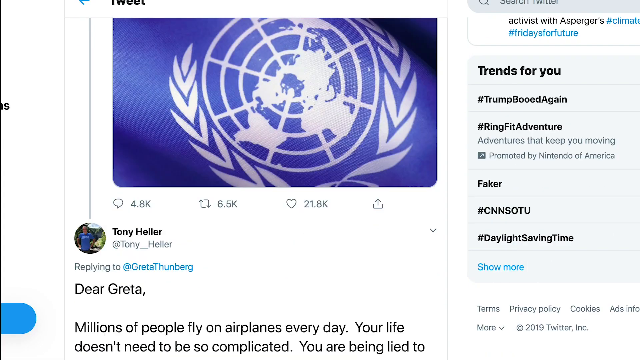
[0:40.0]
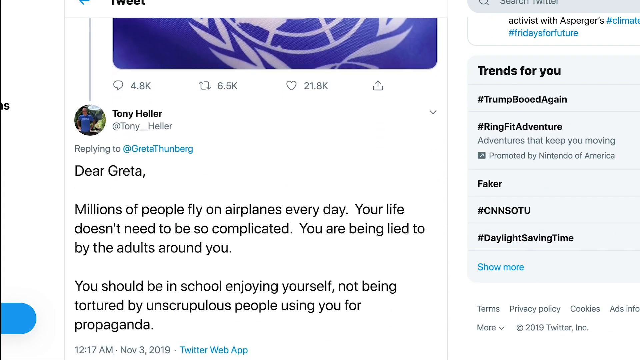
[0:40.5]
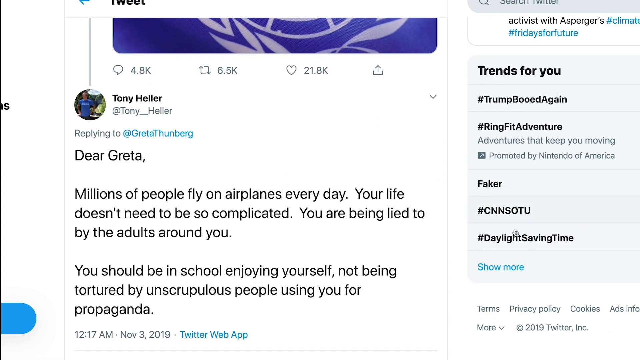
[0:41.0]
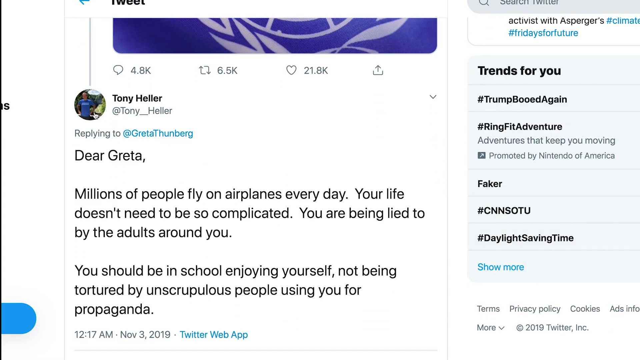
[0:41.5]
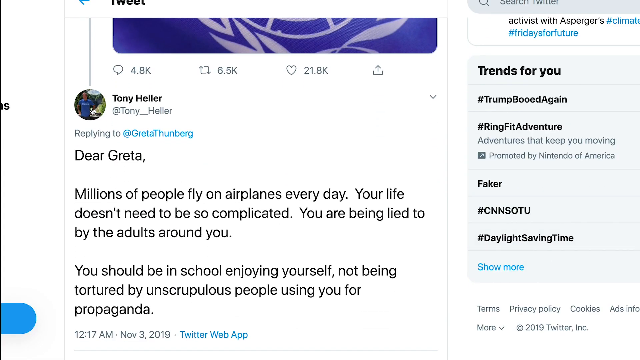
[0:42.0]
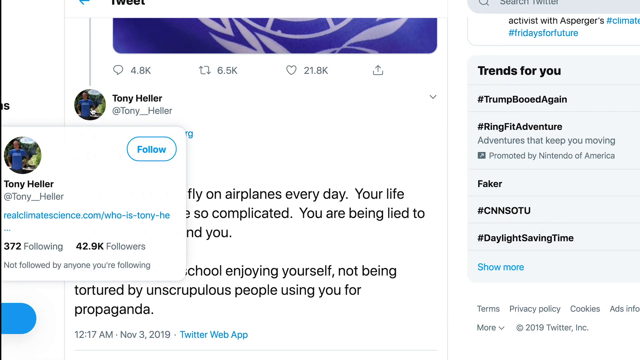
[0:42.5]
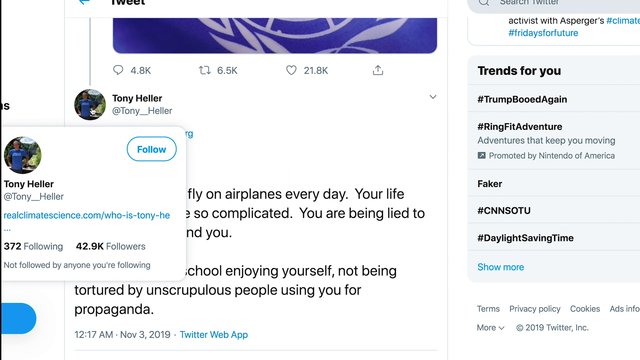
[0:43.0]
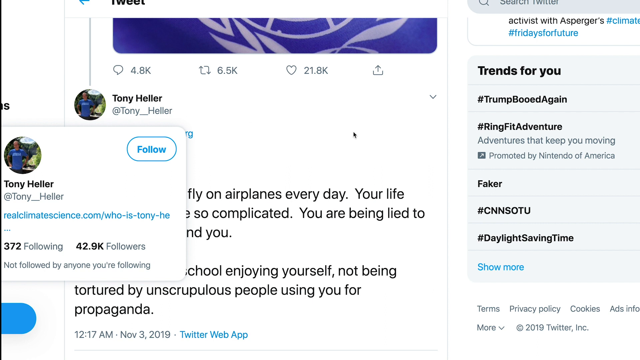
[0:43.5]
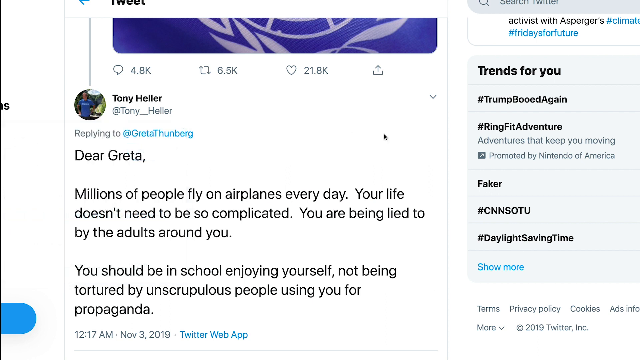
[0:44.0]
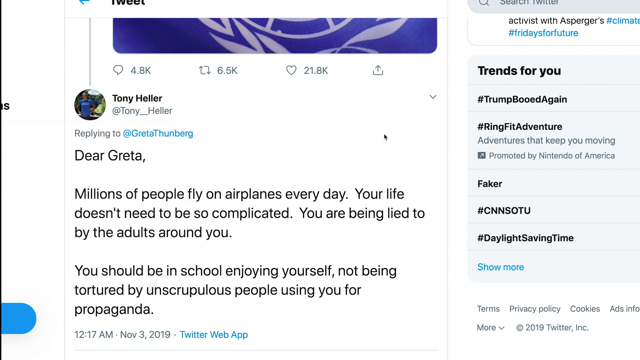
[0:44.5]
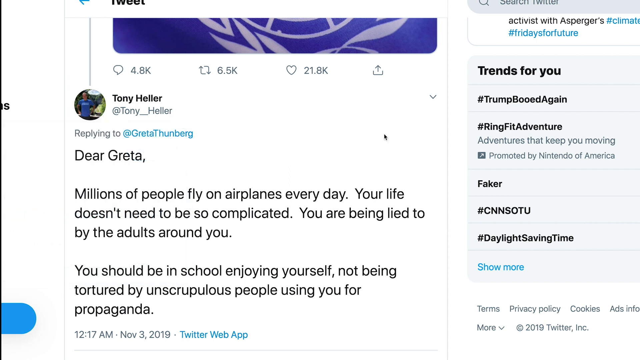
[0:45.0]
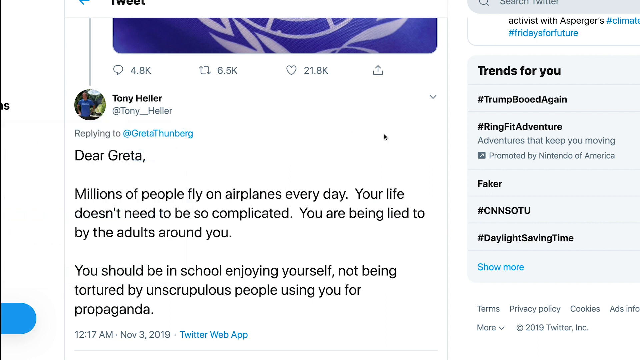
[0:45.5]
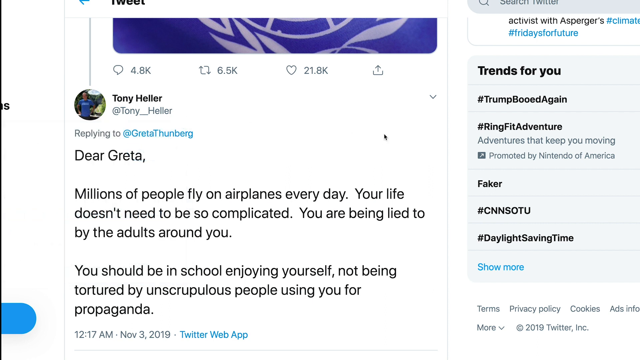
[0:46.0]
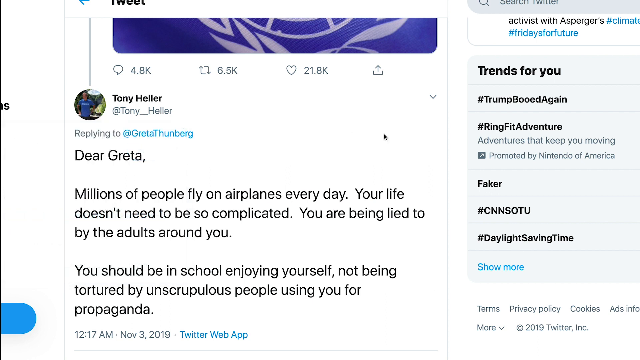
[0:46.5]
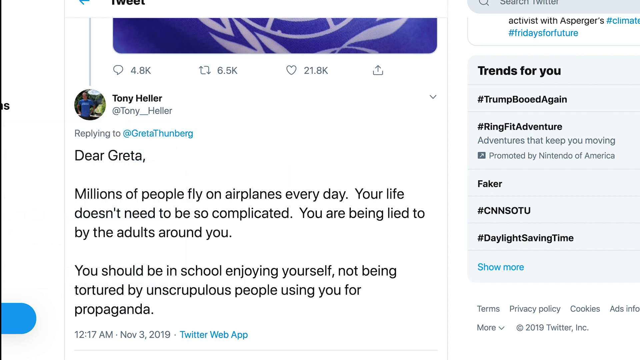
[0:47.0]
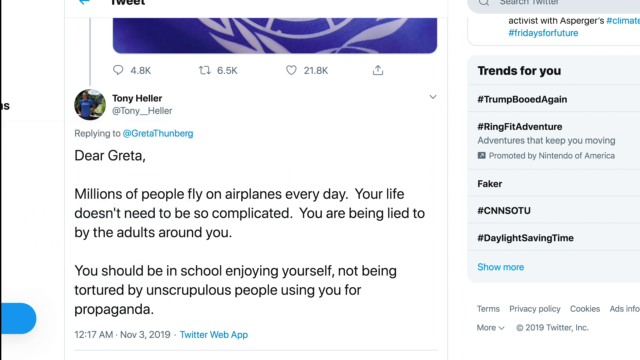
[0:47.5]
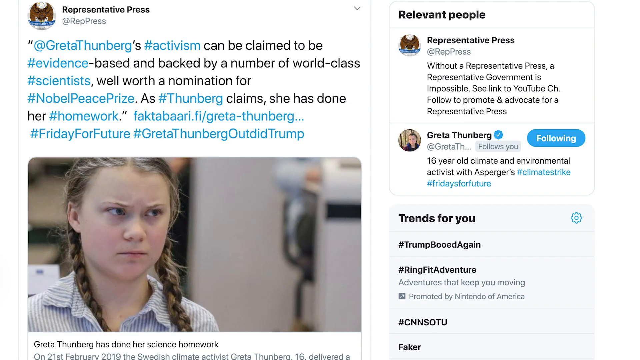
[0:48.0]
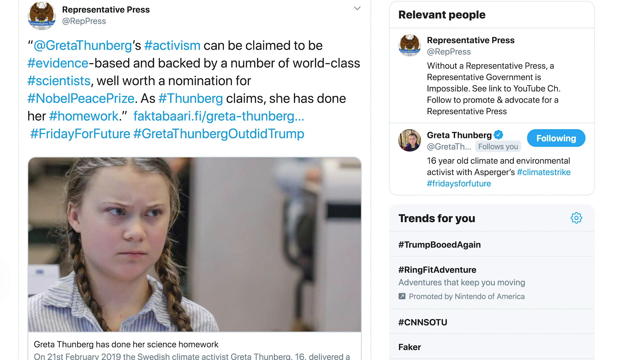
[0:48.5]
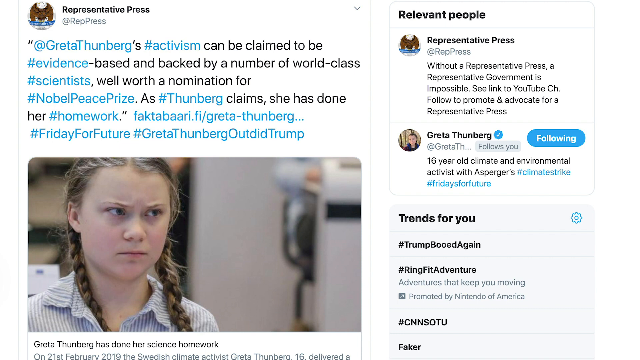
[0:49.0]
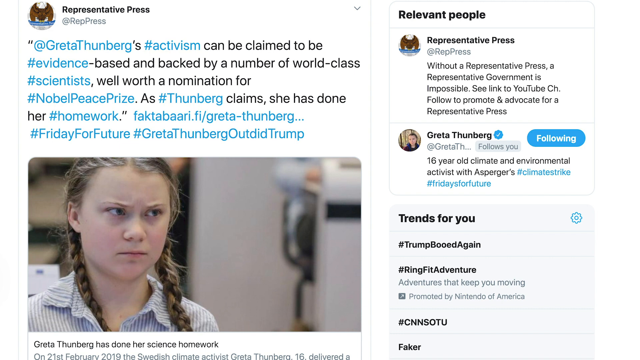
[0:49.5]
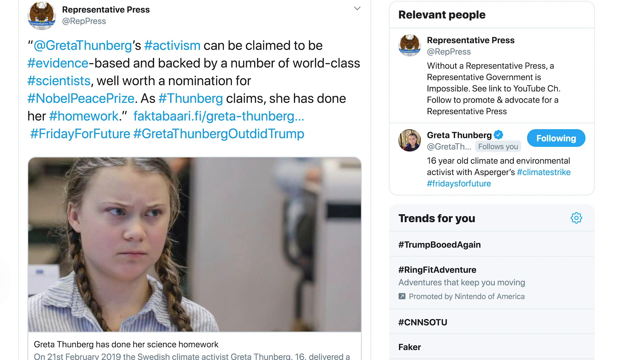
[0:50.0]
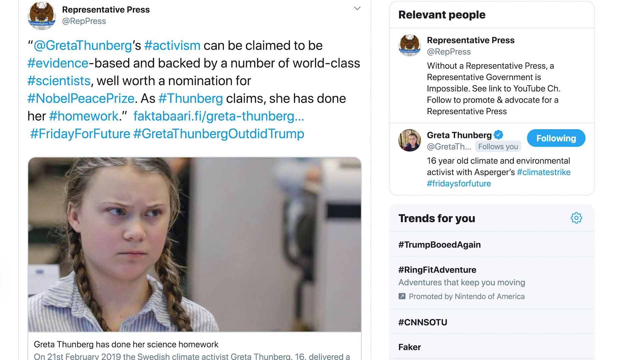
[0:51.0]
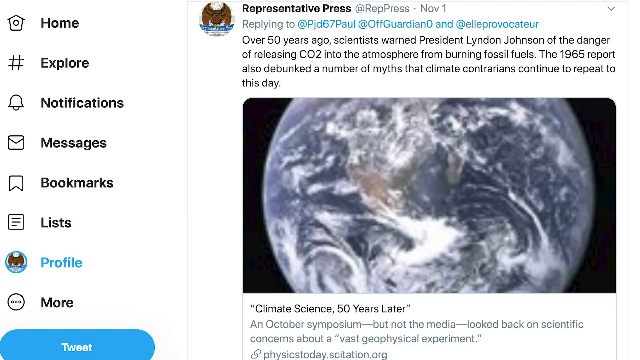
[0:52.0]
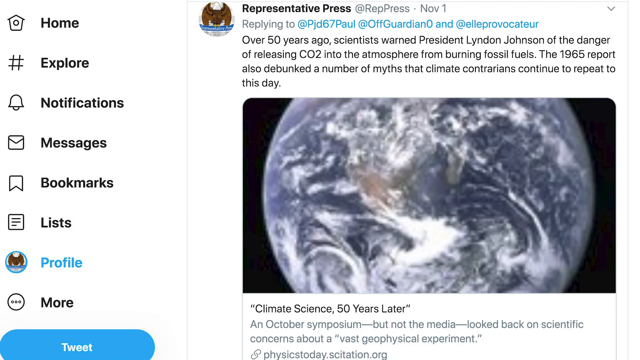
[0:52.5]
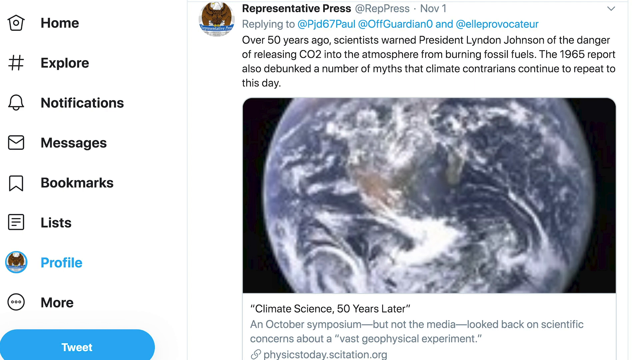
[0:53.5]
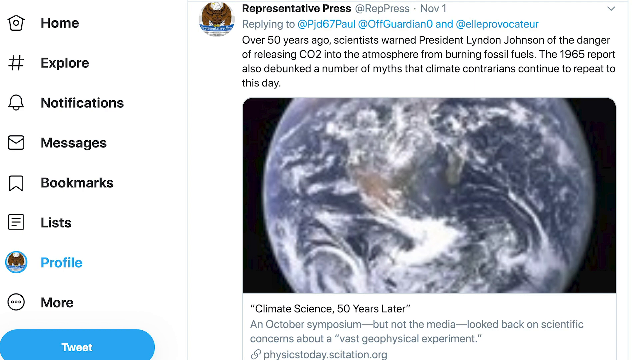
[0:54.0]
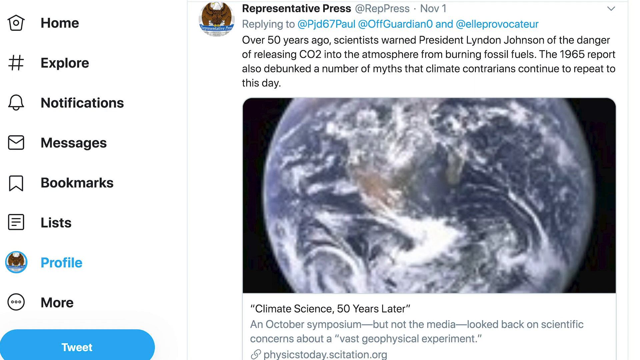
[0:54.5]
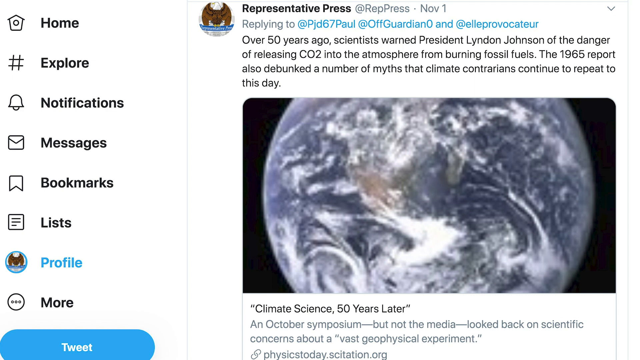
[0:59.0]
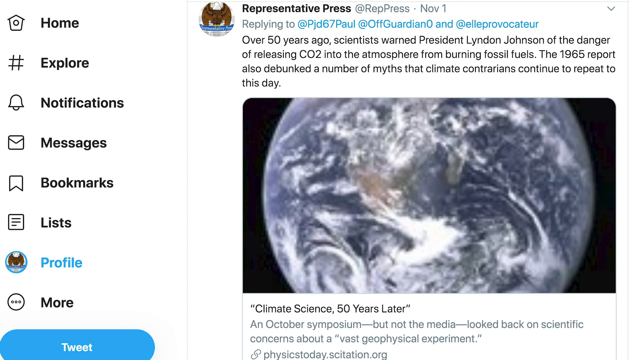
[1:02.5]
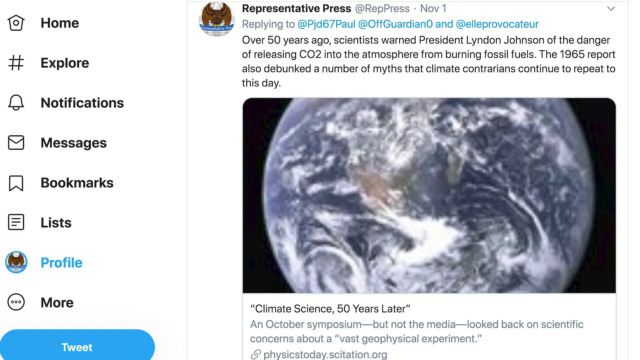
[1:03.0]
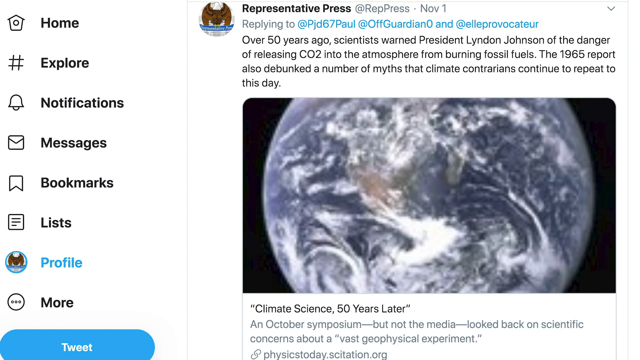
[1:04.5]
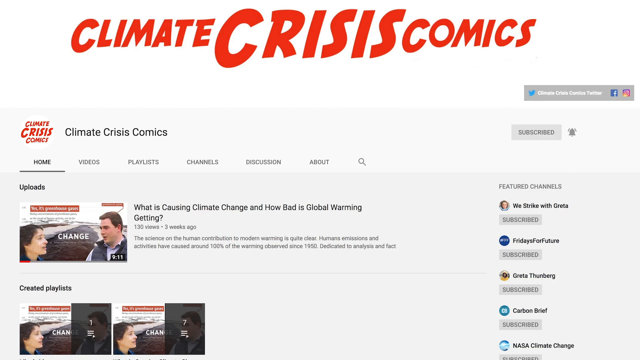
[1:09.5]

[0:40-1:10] A Twitter page shows Tony Heller responding to Greta. The post reads "millions of people fly in airplanes every day. Your life doesn't need to be so complicated," and continues that she should be in school enjoying herself, mentioning "unscrupulous people using you for propaganda." The video cuts to another Twitter page with Jeff Guetta, who looks kind of angry or kind of confused. Next is a Twitter post from a representative of the press about the dangers of CO2 and fossil fuel to the atmosphere; it says that Lyndon Johnson debunked all of the myths that climate contrarians continue to repeat to this day. The post probably has a white background.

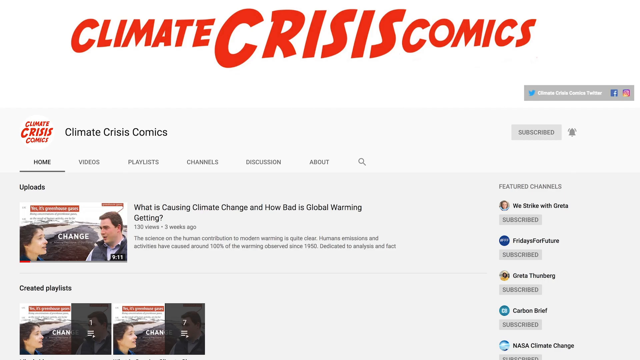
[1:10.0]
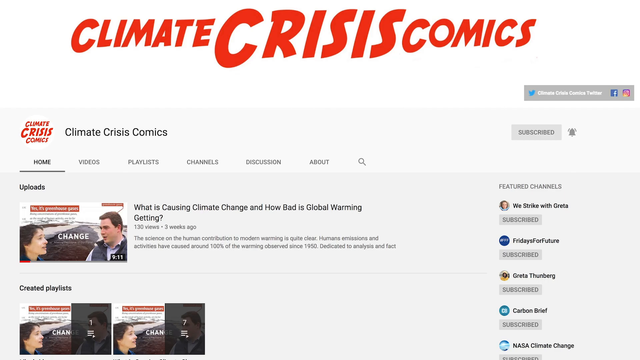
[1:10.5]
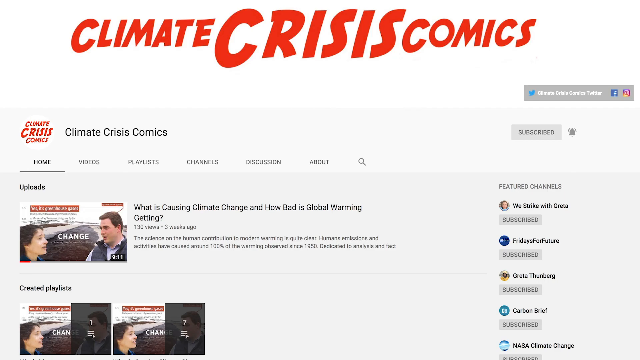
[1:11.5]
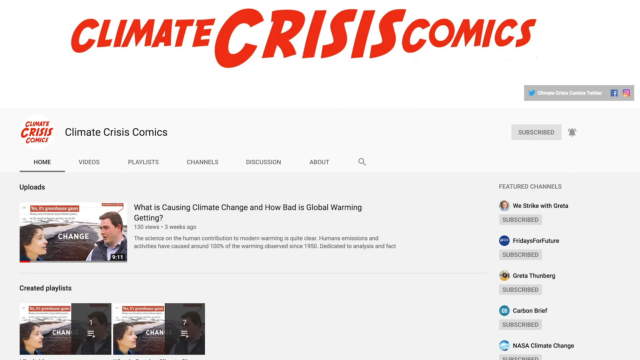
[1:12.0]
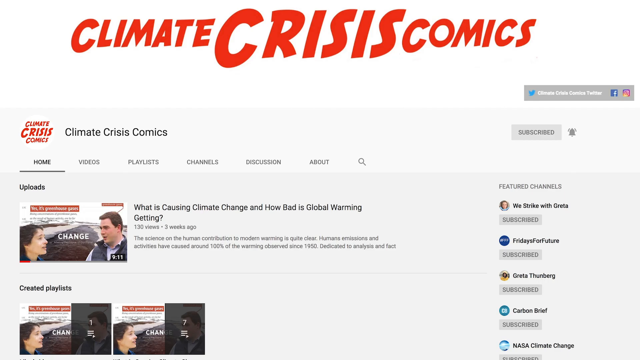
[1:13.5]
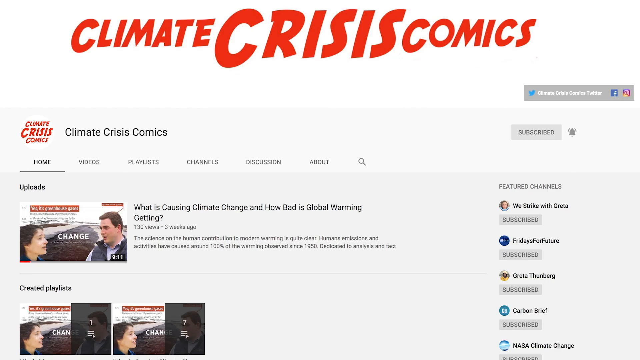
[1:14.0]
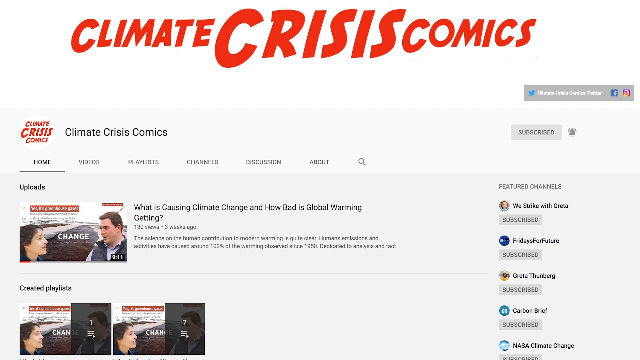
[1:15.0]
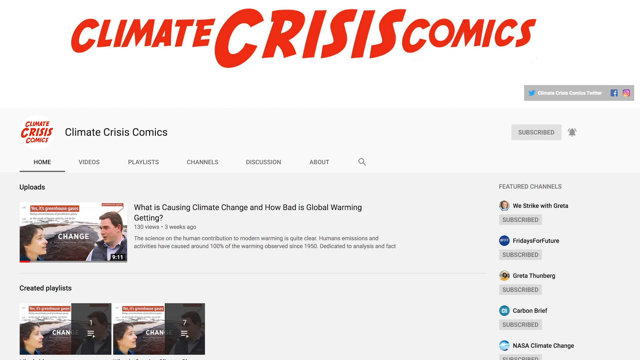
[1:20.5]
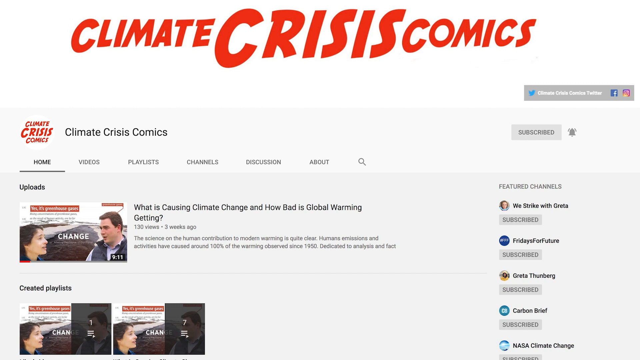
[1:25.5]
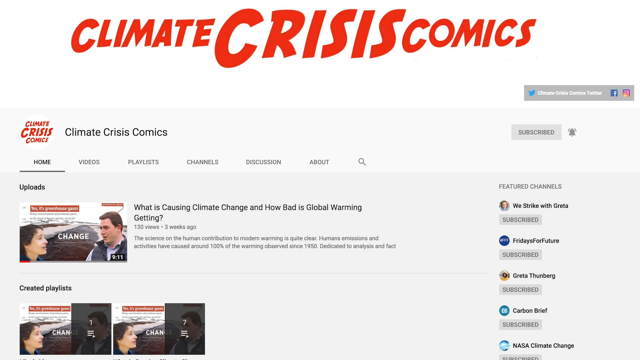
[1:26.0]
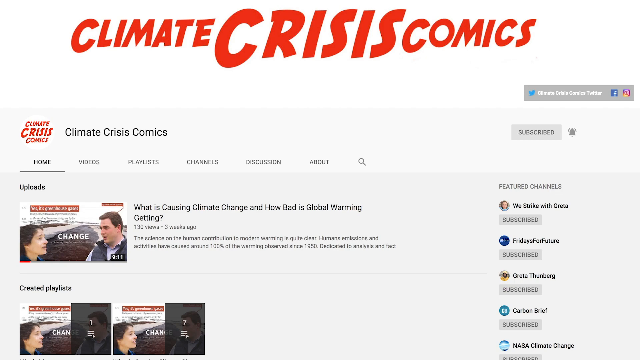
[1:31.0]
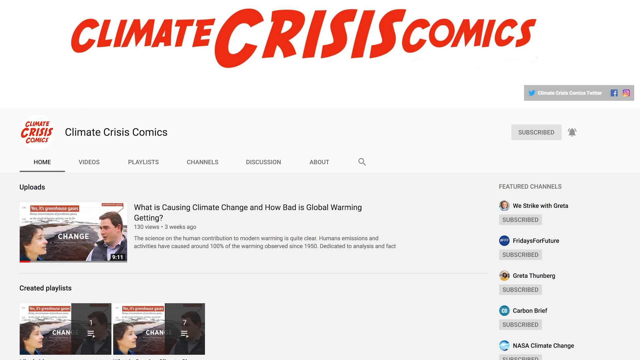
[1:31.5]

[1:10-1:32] A white page appears on a website called Crisis Climate Comics, apparently a page that deals with the climate crisis in a more humorous way. At the top of the video is "what is causing climate change and how bad is global warming getting." "climate crisis comics" is written in orange font at the top of the screen. Featured channels are on the right, and the page has categories: all videos, playlists, channels, discussion, about. A subscribe button and a bell are on the right. The image stays static on the screen for the rest of the shot. In the video shown on the page, a woman is on the left and a man on the right, with the word "change" between them. The page has a white background, and the writing at the top is in orange.